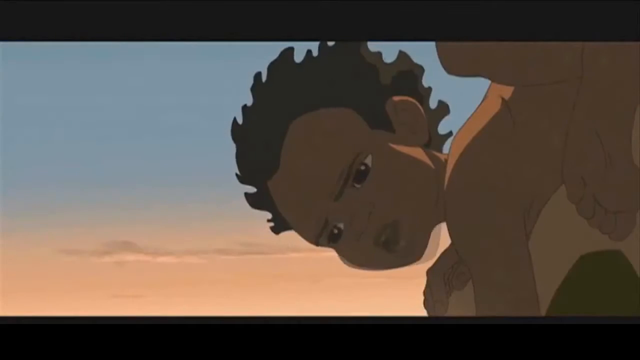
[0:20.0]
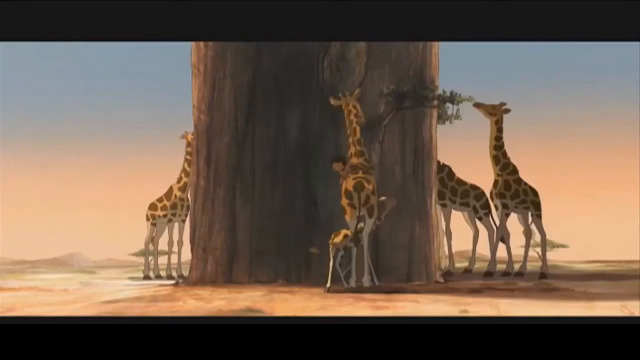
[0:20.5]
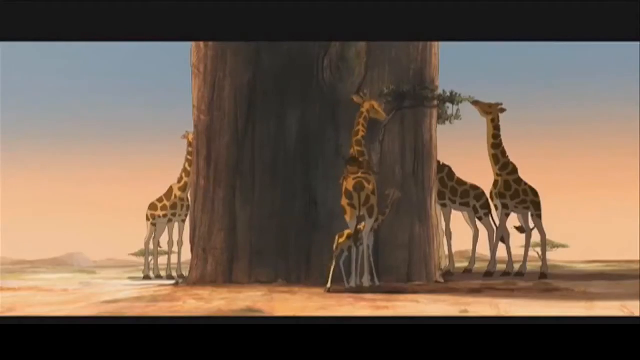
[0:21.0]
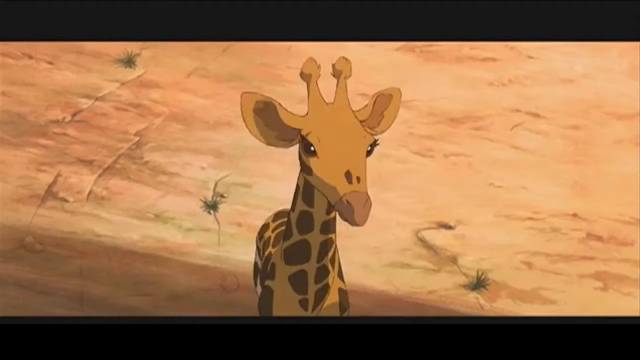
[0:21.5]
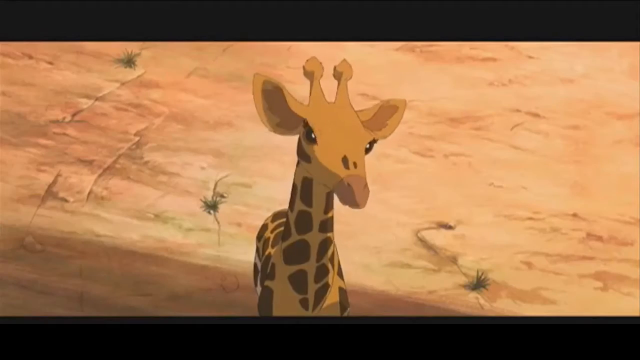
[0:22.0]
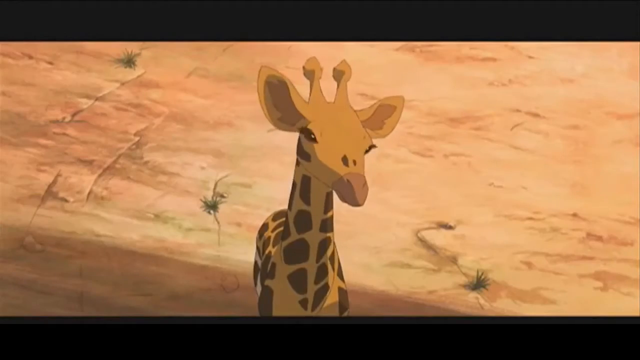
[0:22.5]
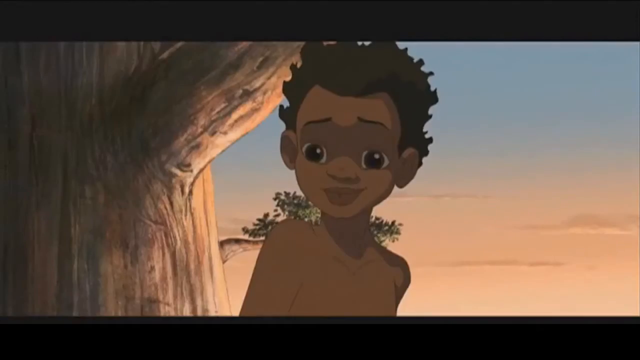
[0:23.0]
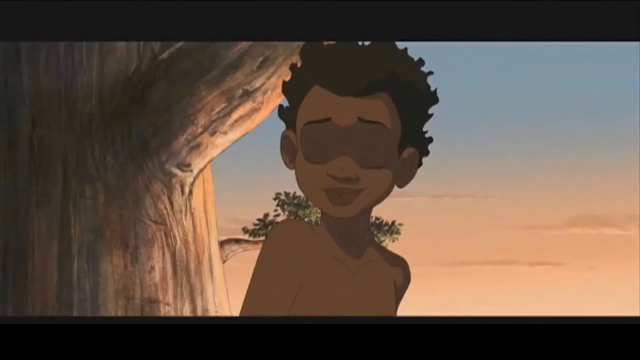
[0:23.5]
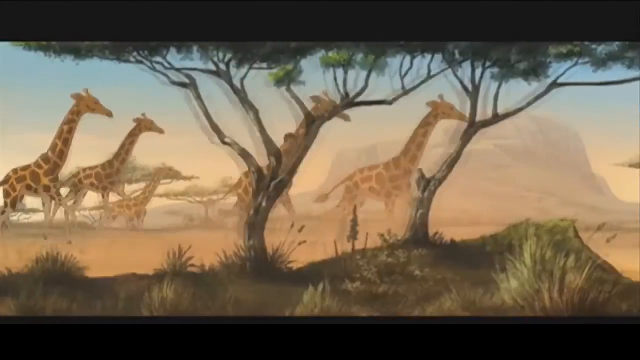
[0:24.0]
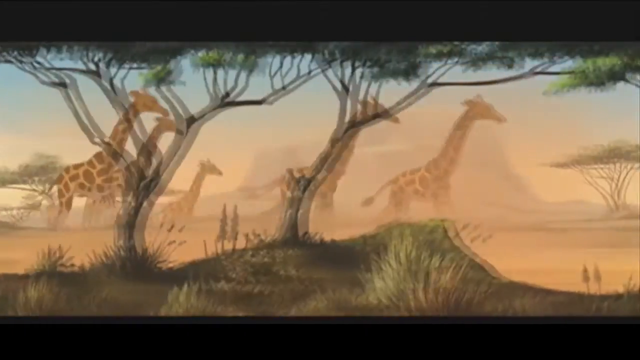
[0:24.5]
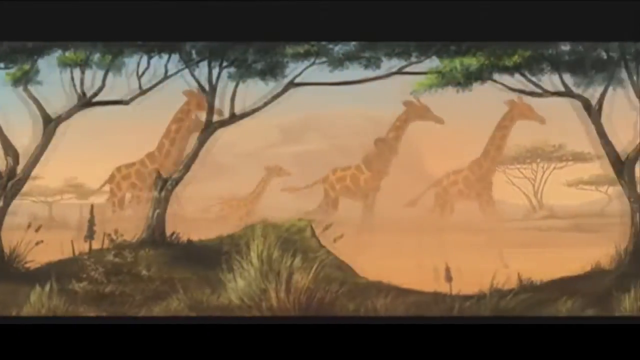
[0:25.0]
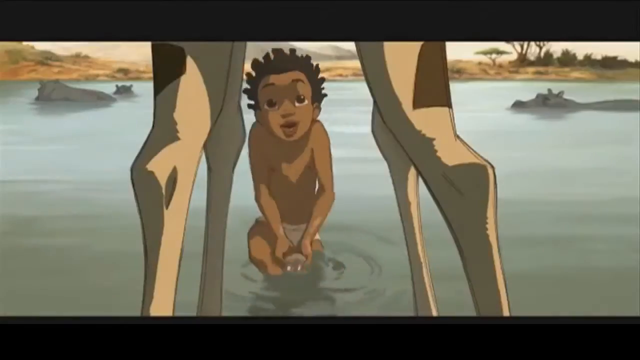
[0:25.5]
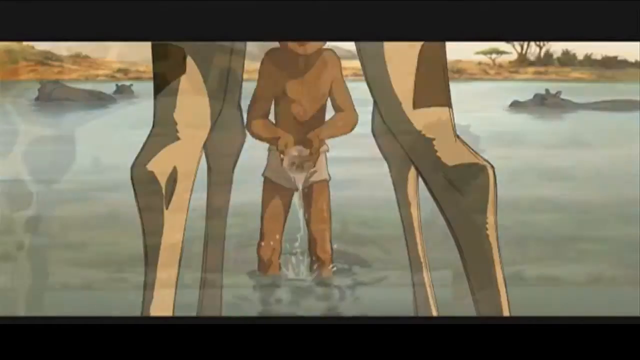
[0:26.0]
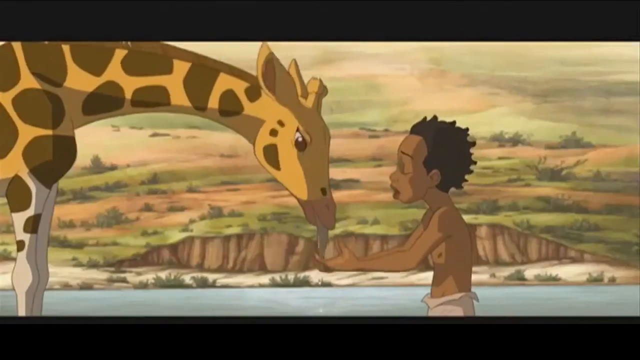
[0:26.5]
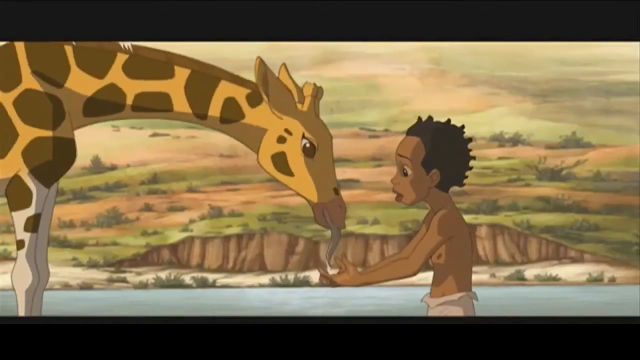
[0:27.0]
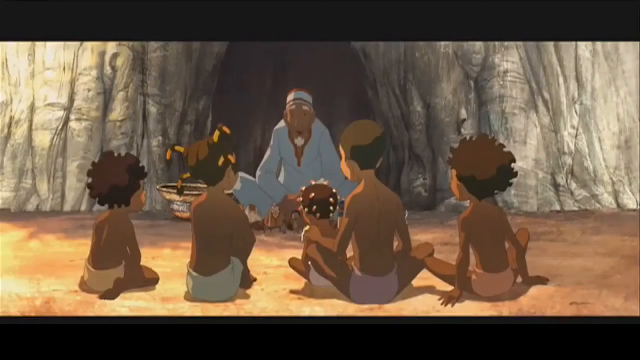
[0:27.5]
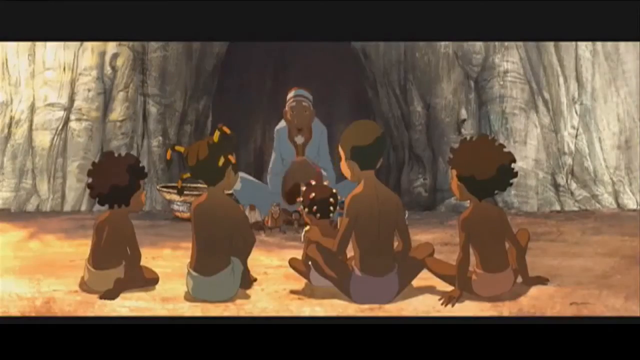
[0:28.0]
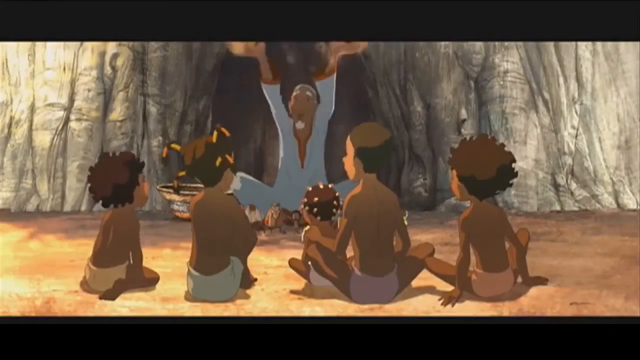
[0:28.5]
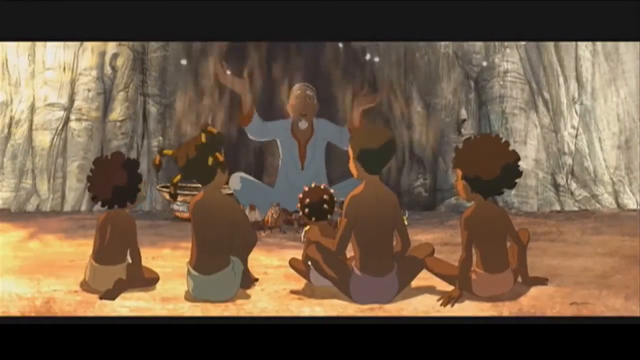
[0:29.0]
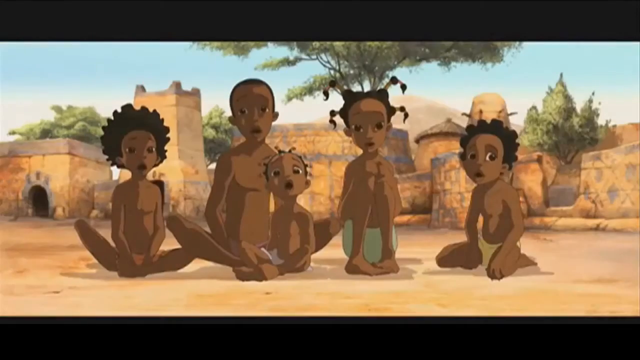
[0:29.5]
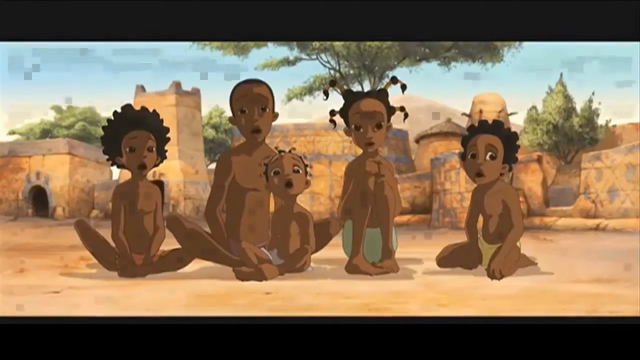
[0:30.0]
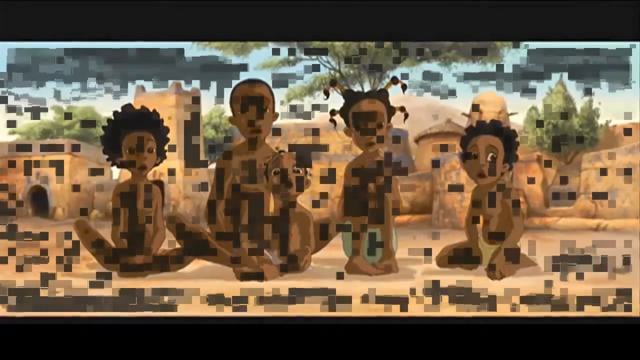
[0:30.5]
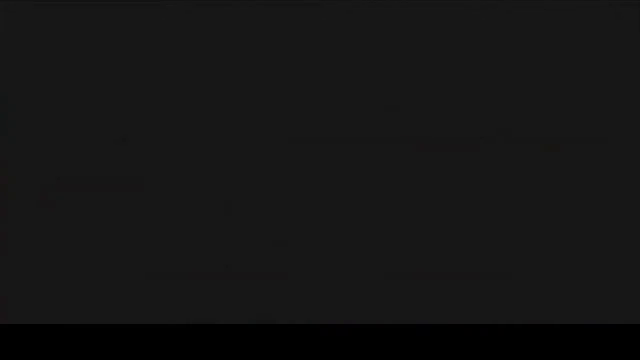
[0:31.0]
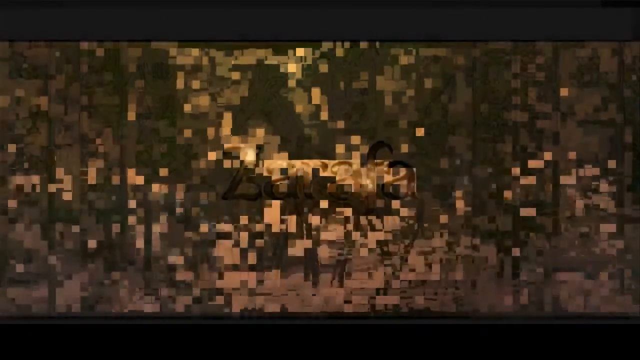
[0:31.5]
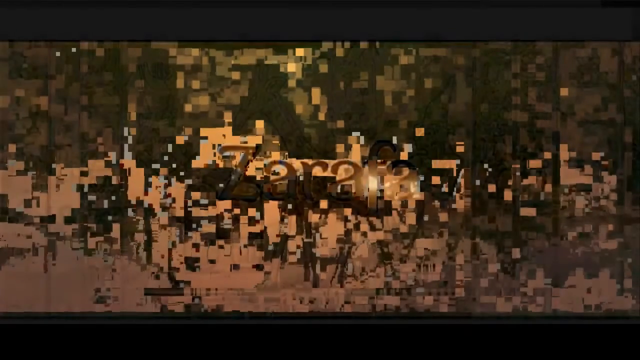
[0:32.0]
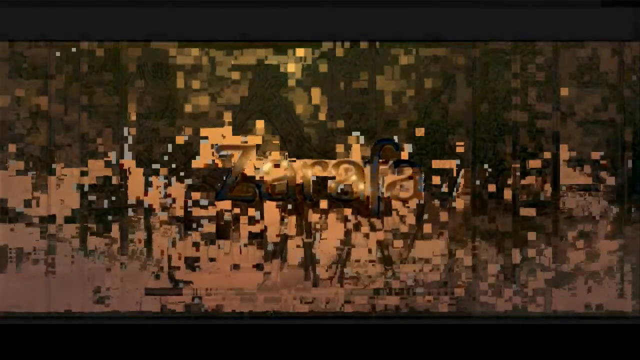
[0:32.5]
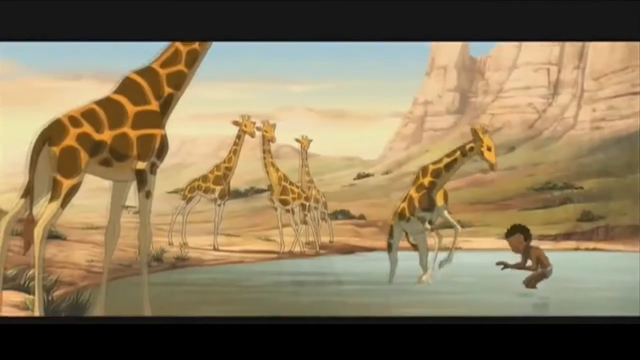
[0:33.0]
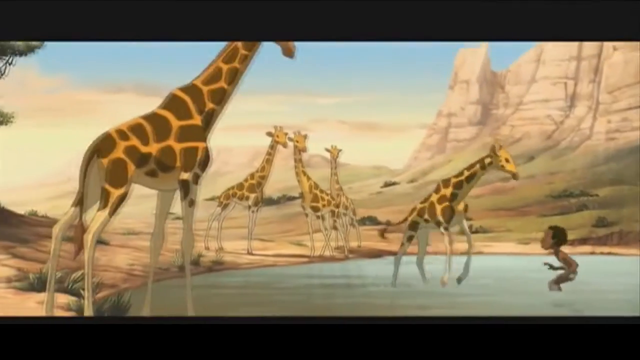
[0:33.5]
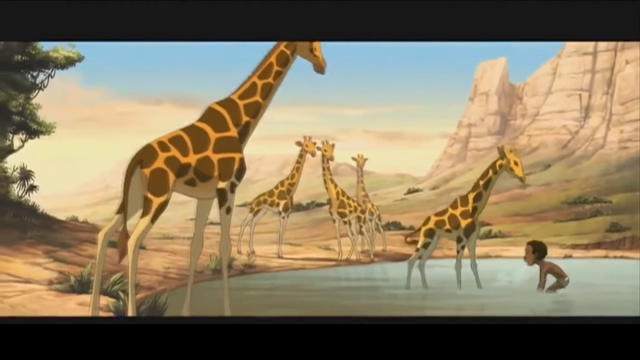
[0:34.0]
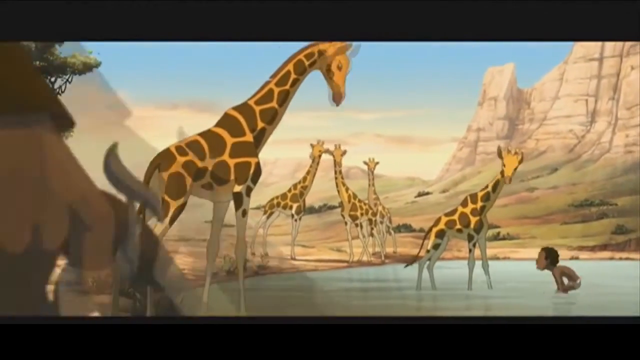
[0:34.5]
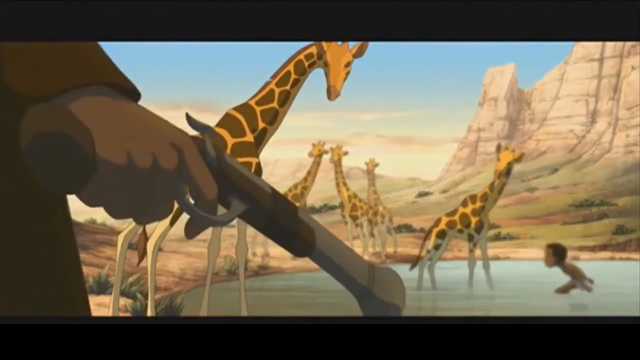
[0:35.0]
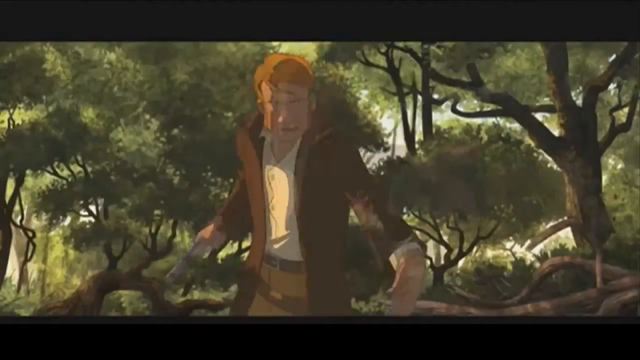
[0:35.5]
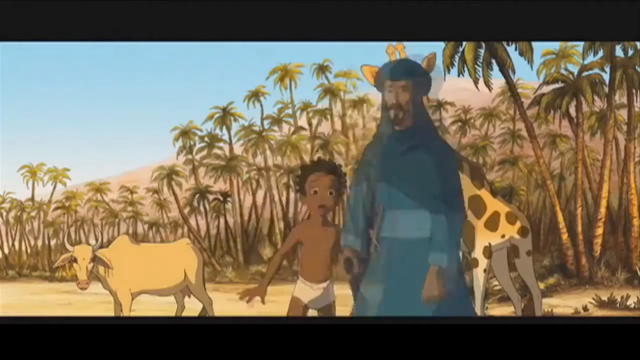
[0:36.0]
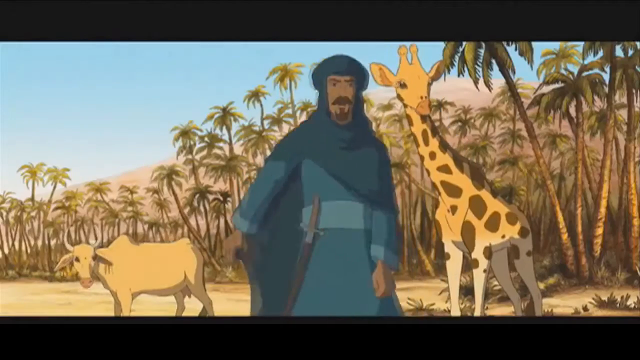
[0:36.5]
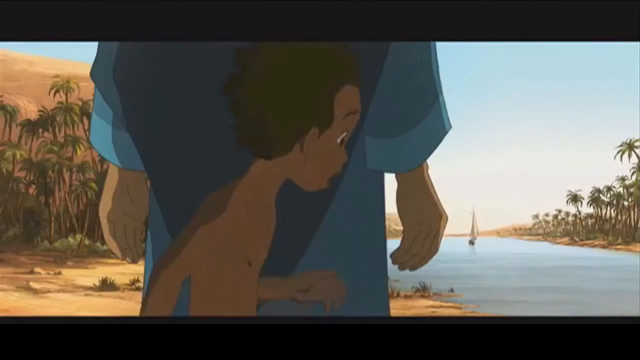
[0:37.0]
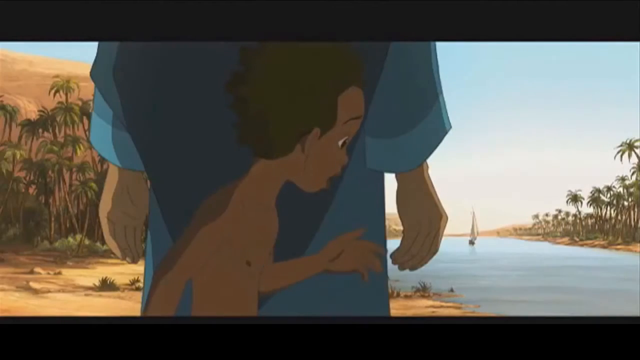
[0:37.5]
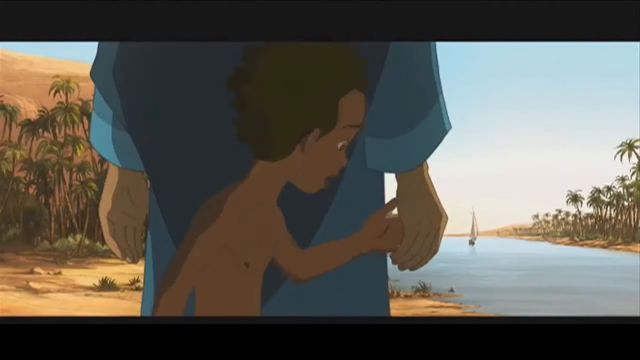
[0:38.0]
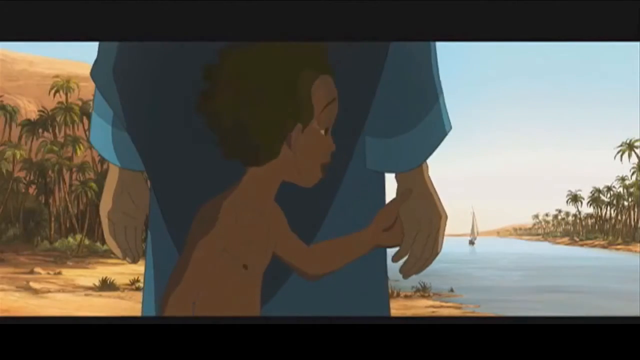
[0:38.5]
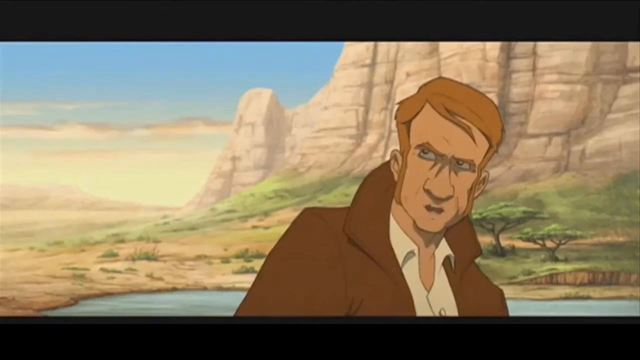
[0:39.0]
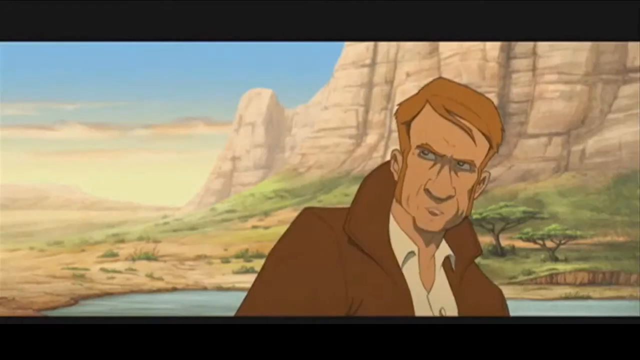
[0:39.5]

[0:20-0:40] The trailer for an animated film continues, showing a young boy who looks like he lives in Africa among animals. He sits on the back of a giraffe while a group of giraffes stands around the base of a large tree. He smiles at a small giraffe; he has tan skin, dark curly hair and large dark eyes. A pack of giraffes runs through what looks like an African savannah, with the boy clinging to the neck of one of them. At a pool, he sits in the water and lifts his cupped hands filled with water, and a giraffe leans down to lick the water out of his hands. The scene changes to an elderly man sitting in front of what looks like a cave, with a group of children who look similar to the boy sitting cross-legged in front of him. He throws some dirt up in the air and it comes down in front of them, and the shot switches to the children looking at him in surprise. The screen fades and the name "Zarafa" appears in the middle of the screen. In another scene the boy sits in a pool surrounded by giraffes, and a man with light hair appears holding a gun. Another scene shows a man in Arab-style clothing, with a blue turban and a scimitar attached to his waist, standing in front of the young boy as if to protect him from the man with the gun.